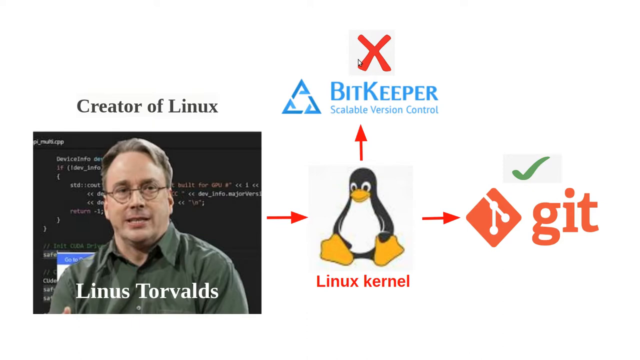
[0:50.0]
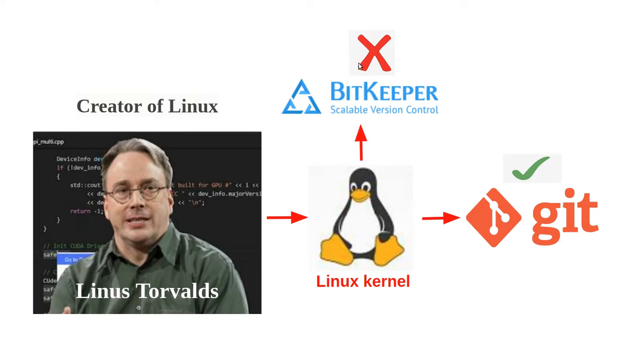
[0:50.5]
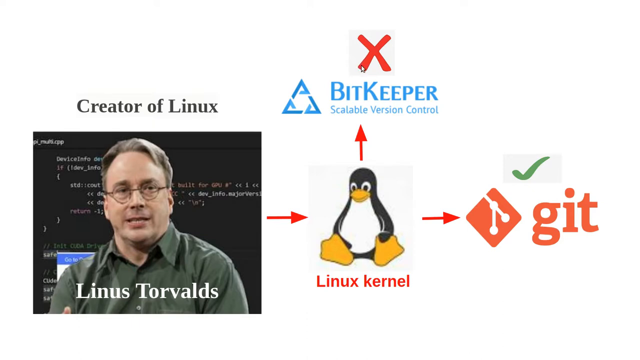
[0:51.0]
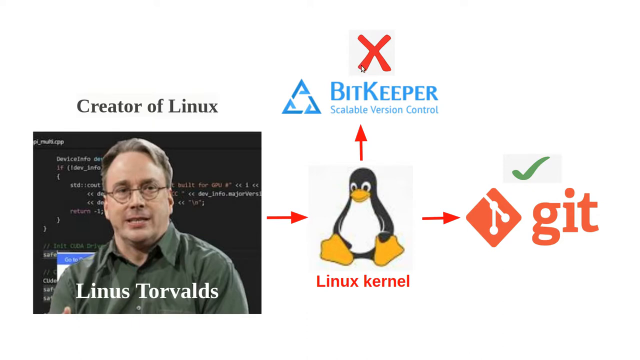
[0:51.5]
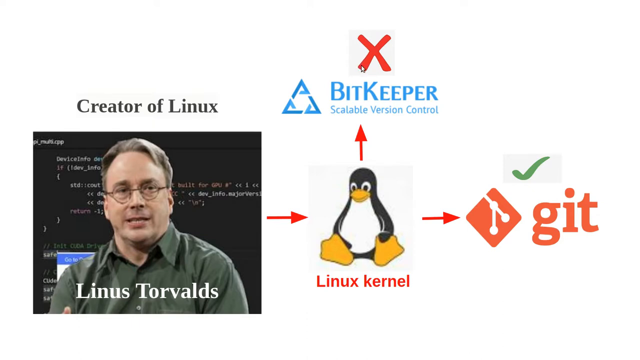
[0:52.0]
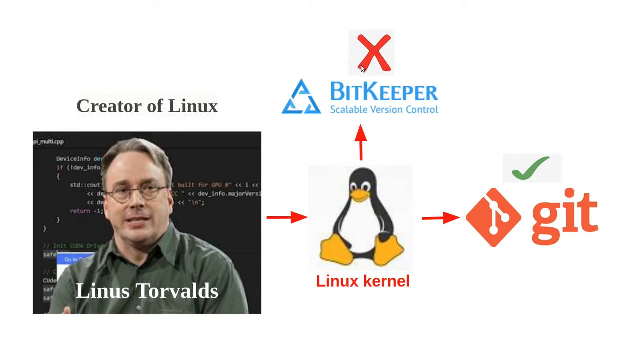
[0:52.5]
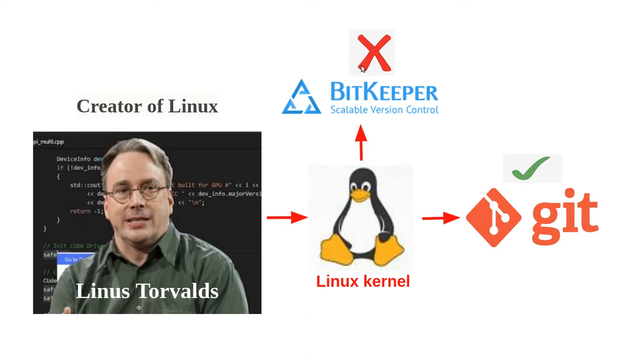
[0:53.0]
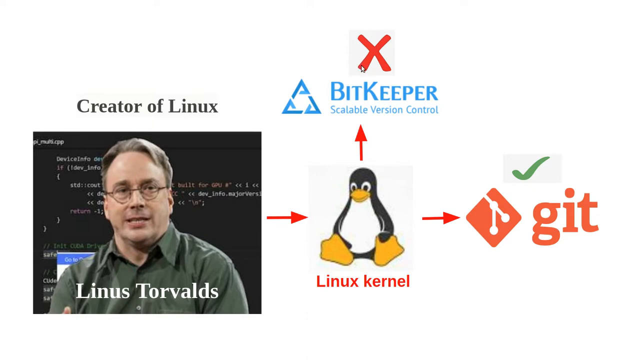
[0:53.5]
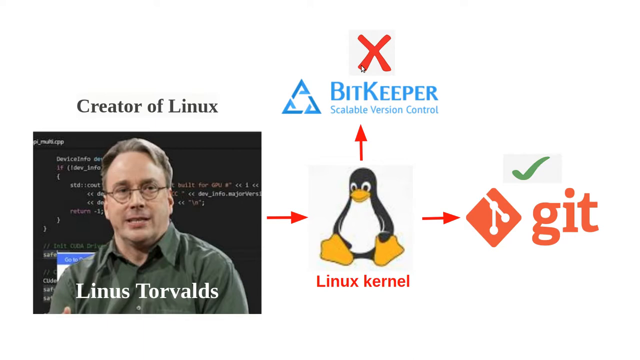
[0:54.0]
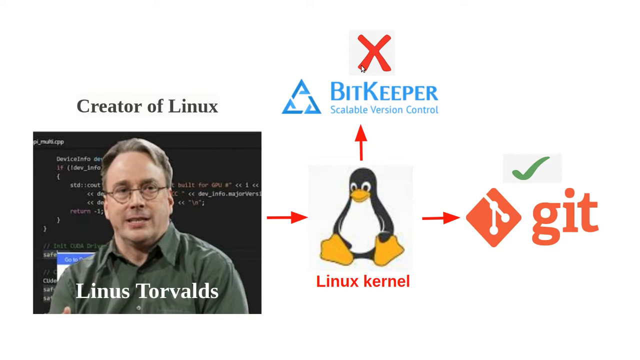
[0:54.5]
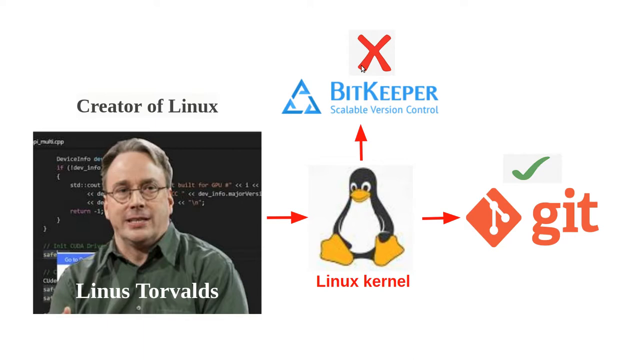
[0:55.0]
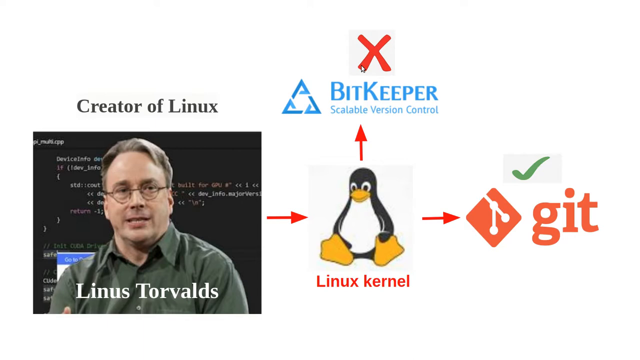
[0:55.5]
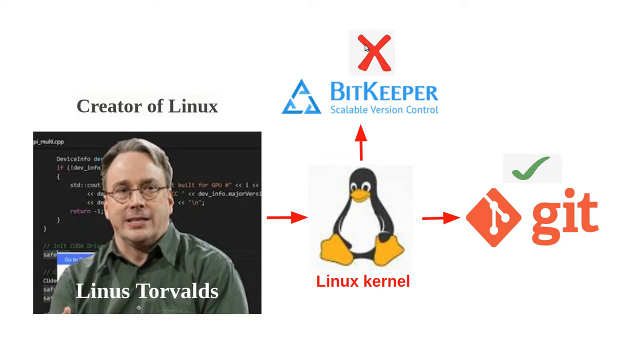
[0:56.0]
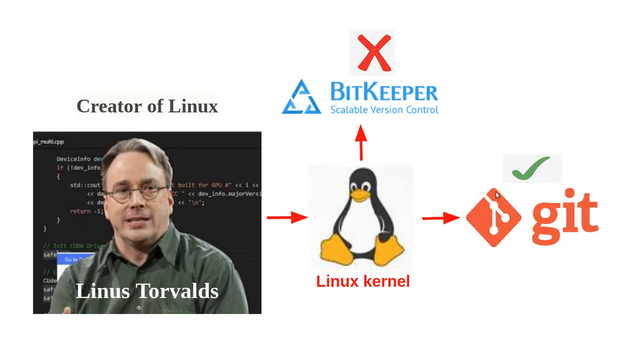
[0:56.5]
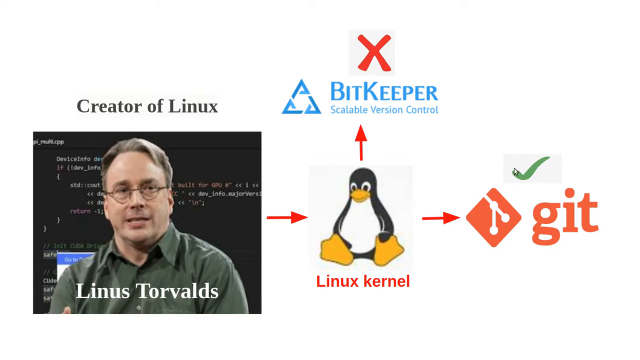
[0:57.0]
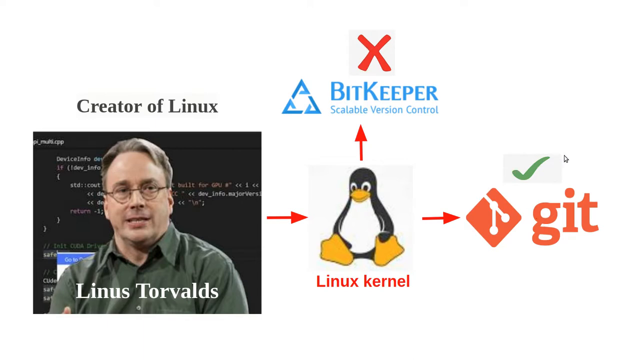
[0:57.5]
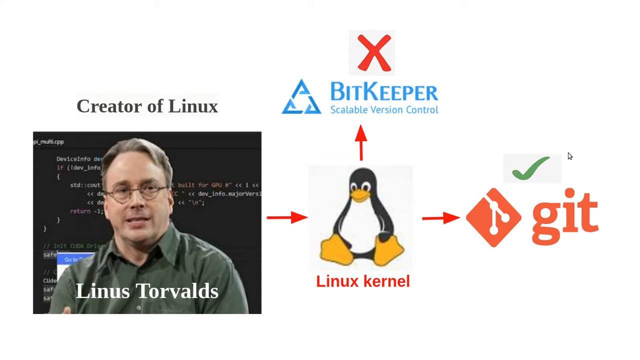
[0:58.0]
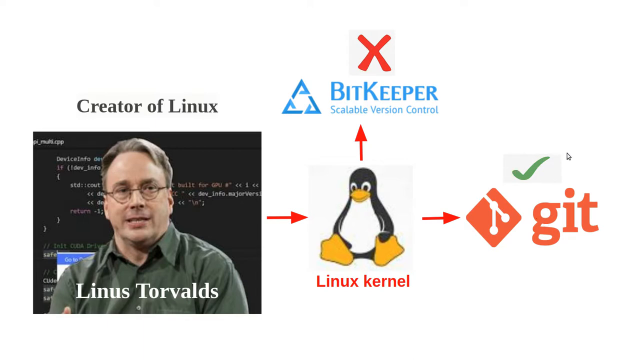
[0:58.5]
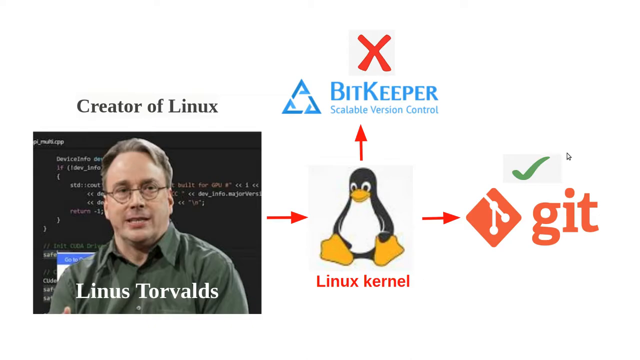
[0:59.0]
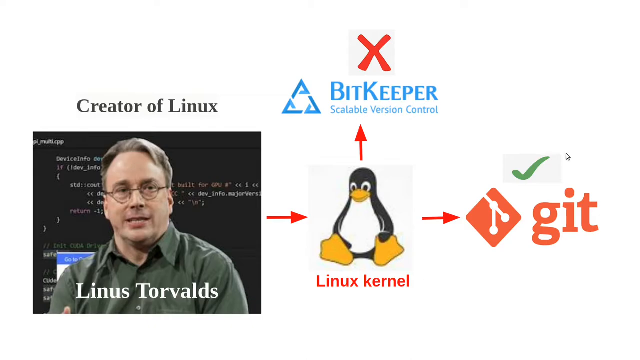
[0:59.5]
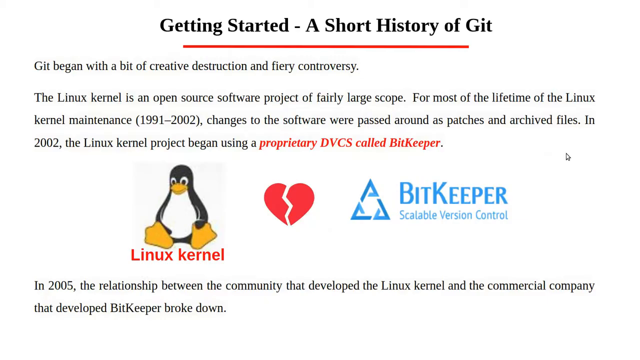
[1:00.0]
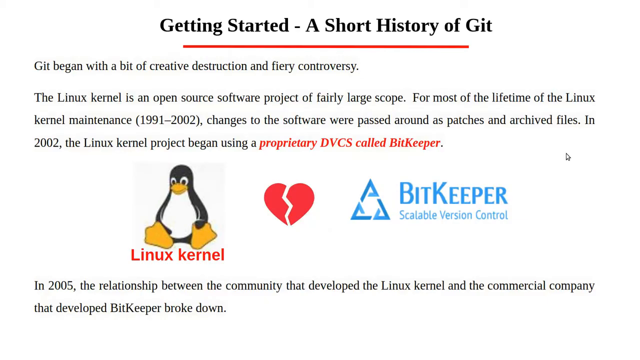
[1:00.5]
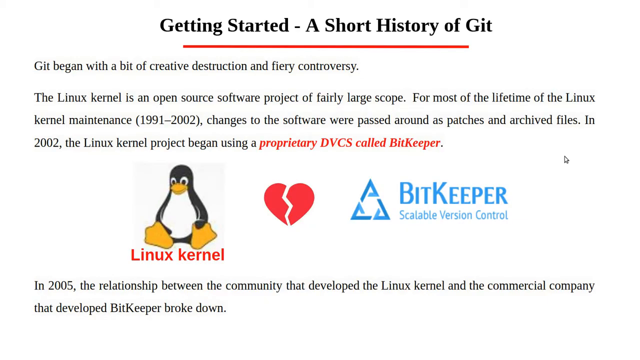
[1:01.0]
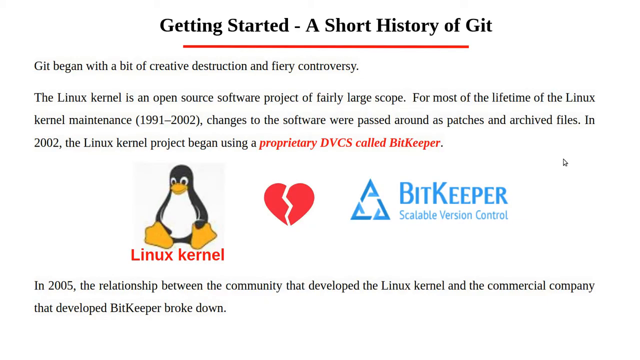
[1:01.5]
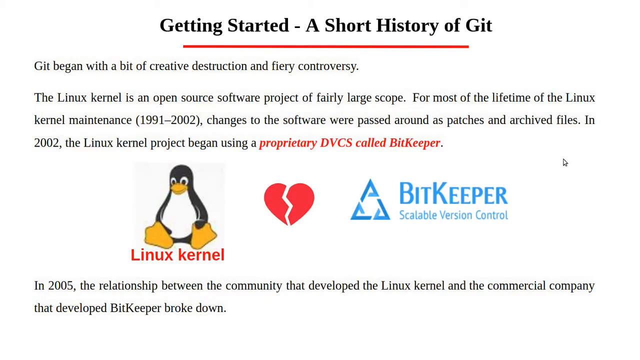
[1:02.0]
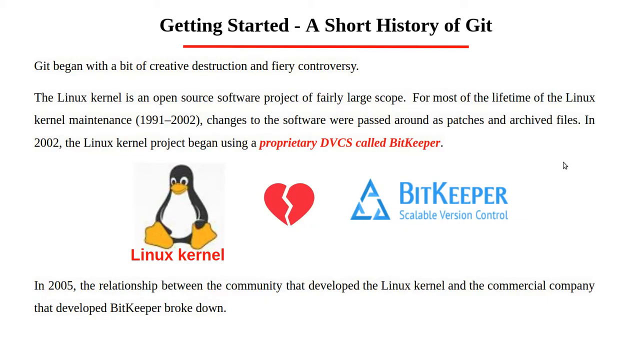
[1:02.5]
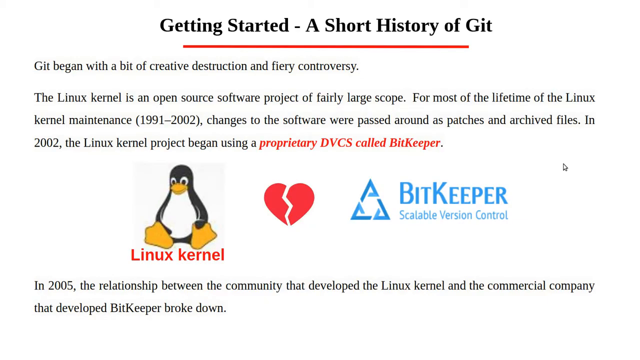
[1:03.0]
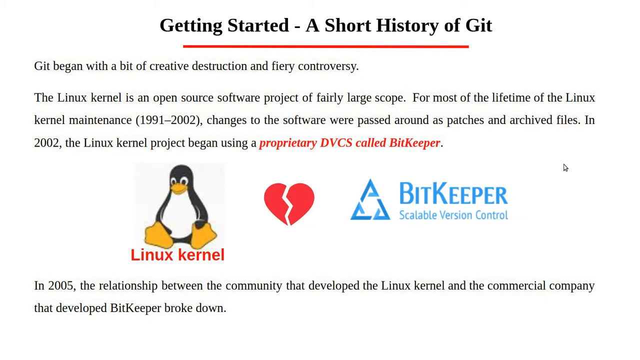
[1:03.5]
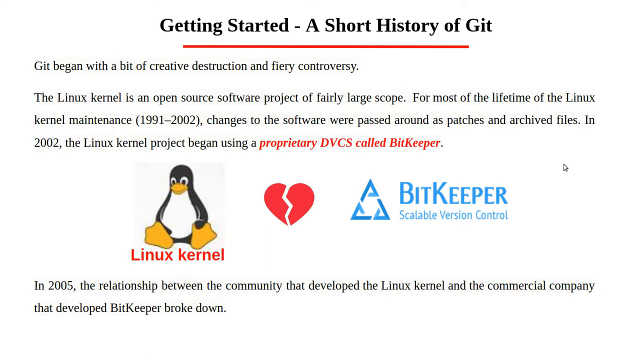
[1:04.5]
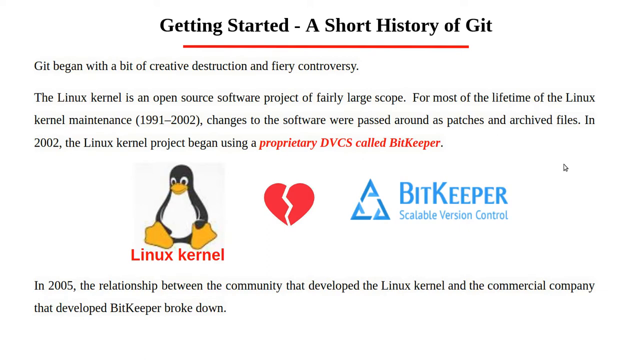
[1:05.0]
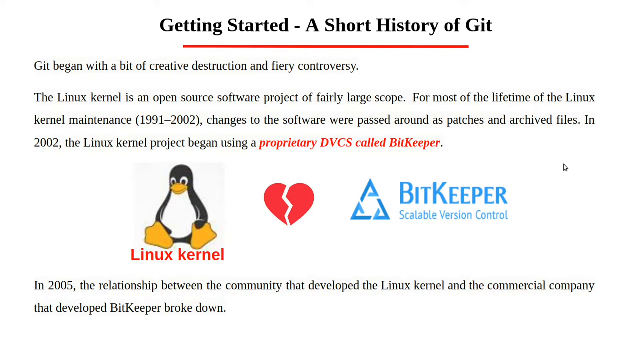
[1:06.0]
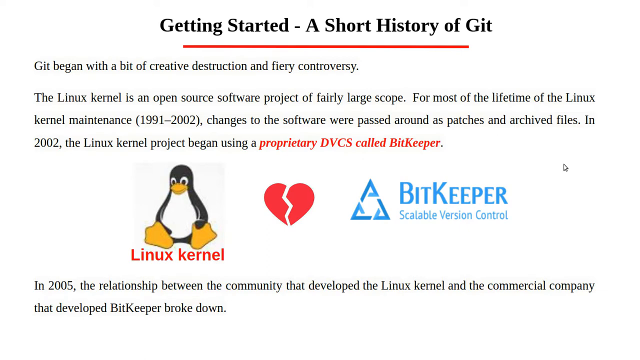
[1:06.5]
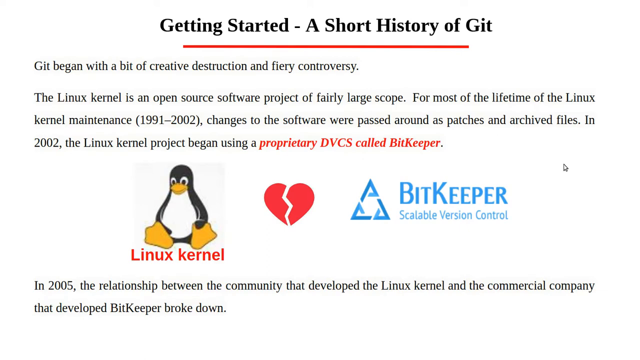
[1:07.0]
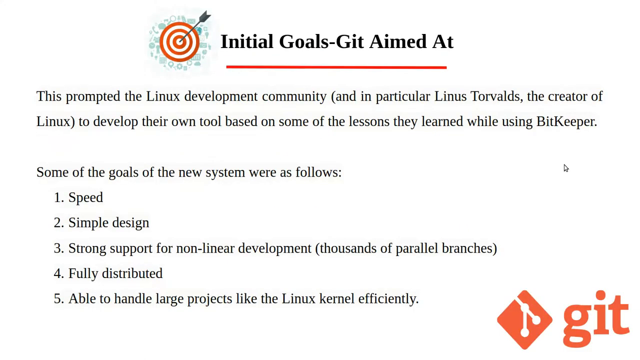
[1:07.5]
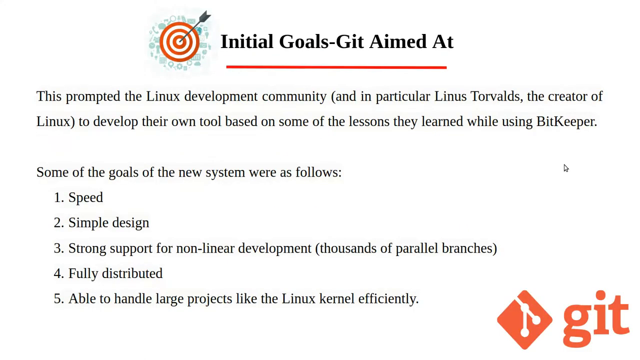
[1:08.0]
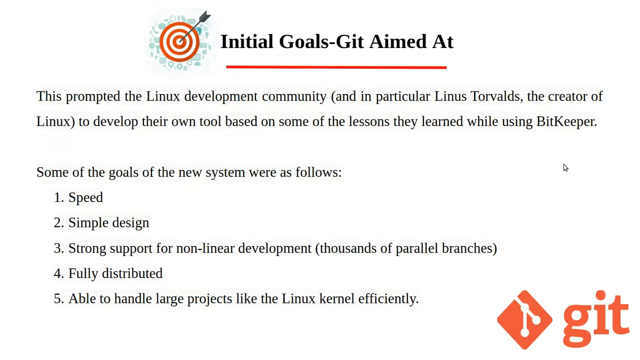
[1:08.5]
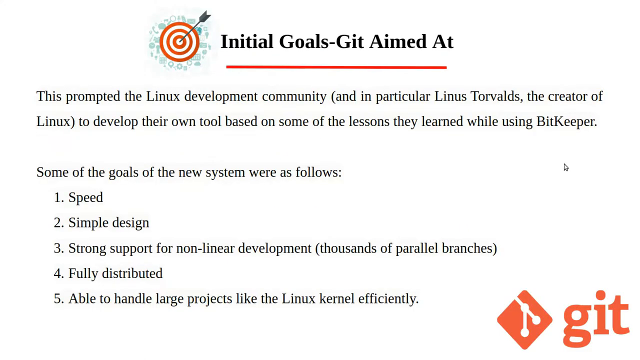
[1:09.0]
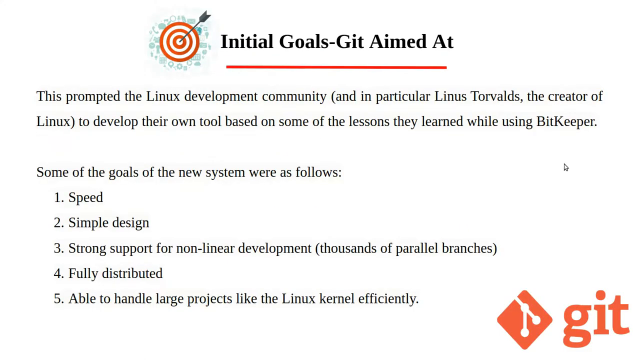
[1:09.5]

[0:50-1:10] The video gets started on the short history of Git. It presents the Linux kernel as an open source software project of very large scope, notes that in 2002 the Linux project began using a proprietary DVS called BitKeeper, and that in 2005 the relationship between the community developing the Linux kernel and the commercial company behind BitKeeper broke down. An illustration shows the Linux kernel as a broken image at the point of the break with BitKeeper. The video then lists what was learned from BitKeeper: speed, simple design, strong support for linear development, fully distributed, able to handle large projects.